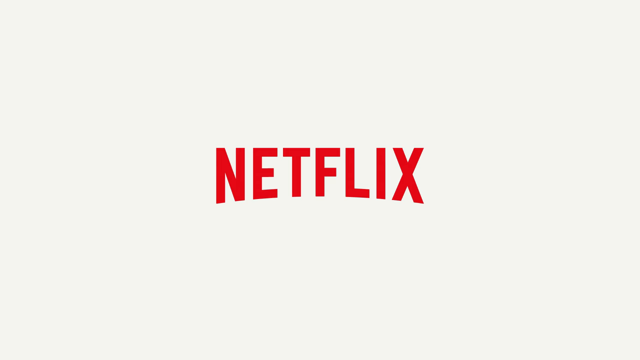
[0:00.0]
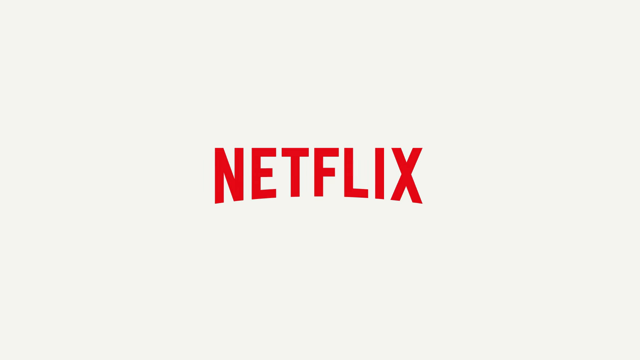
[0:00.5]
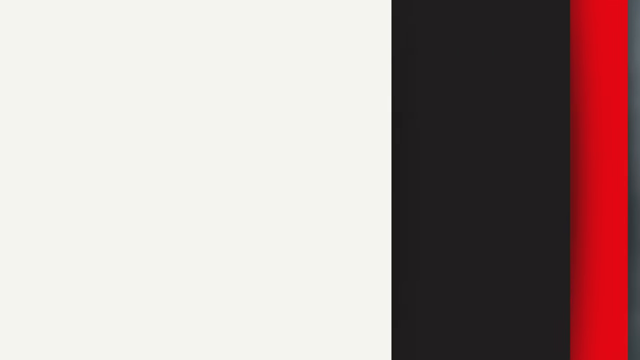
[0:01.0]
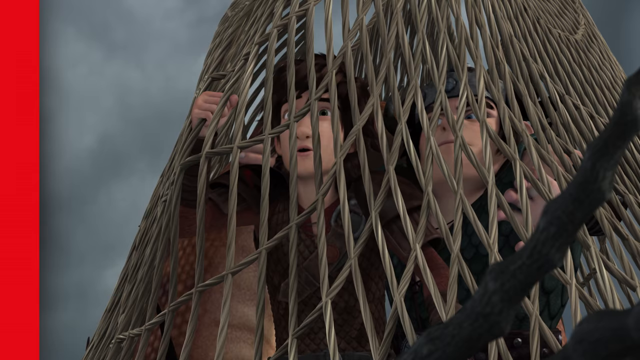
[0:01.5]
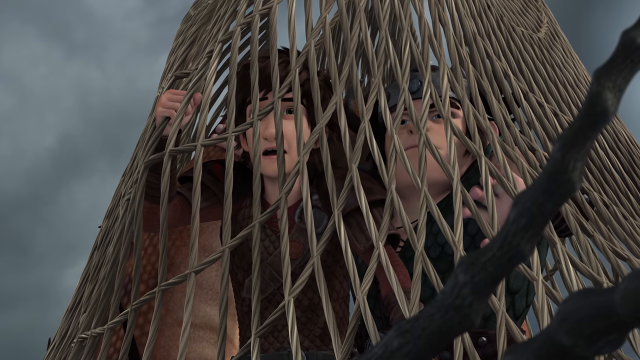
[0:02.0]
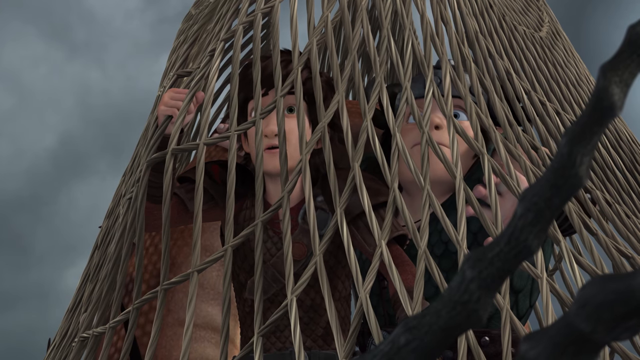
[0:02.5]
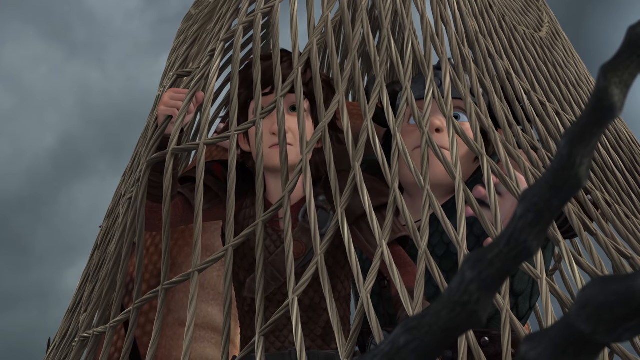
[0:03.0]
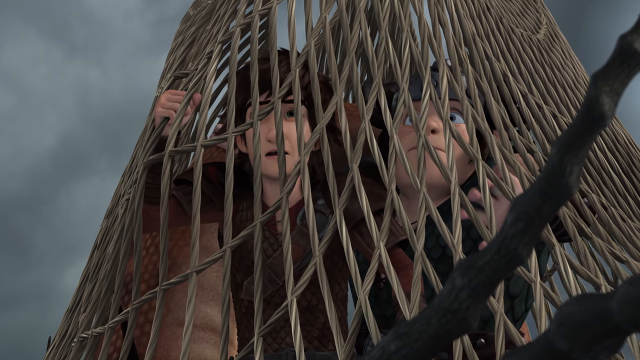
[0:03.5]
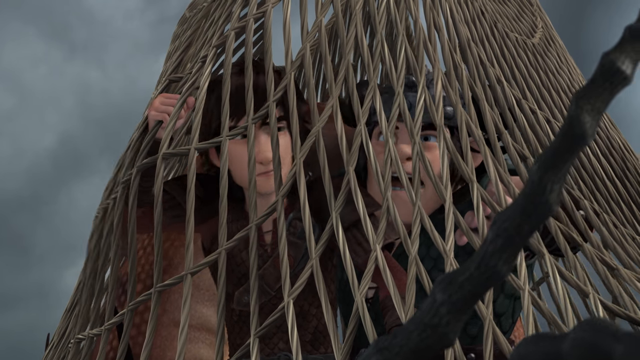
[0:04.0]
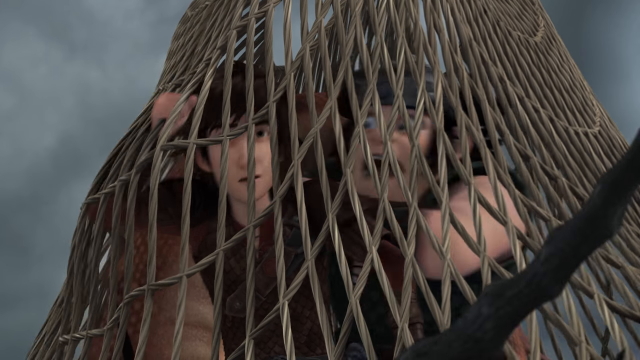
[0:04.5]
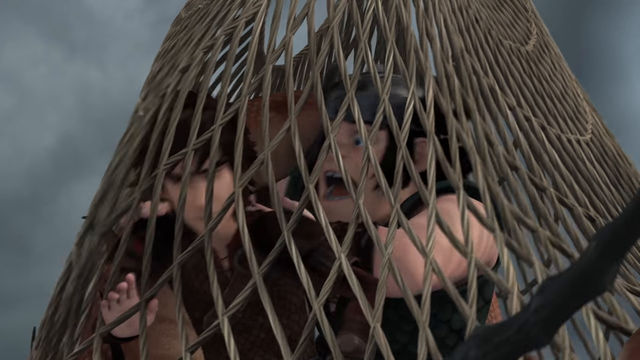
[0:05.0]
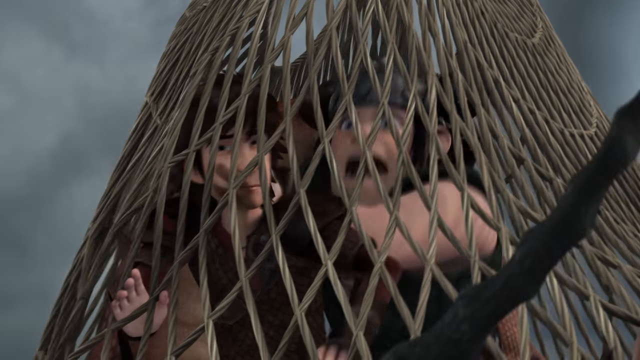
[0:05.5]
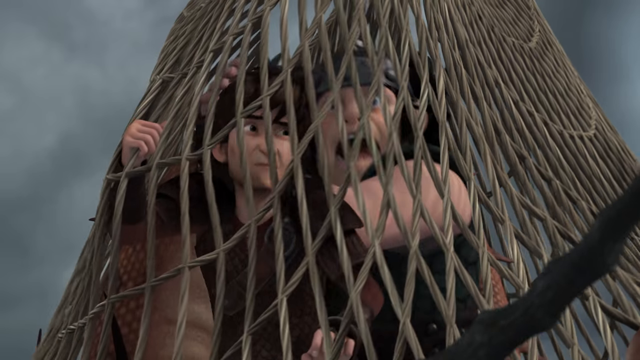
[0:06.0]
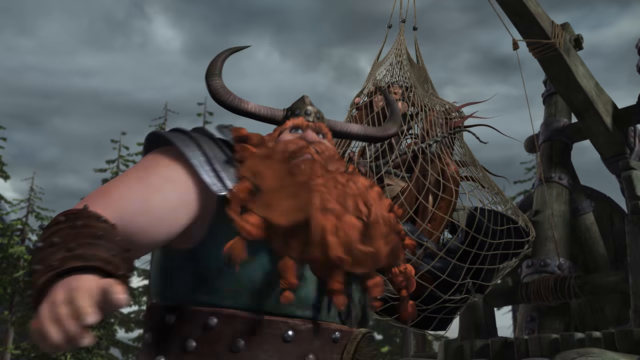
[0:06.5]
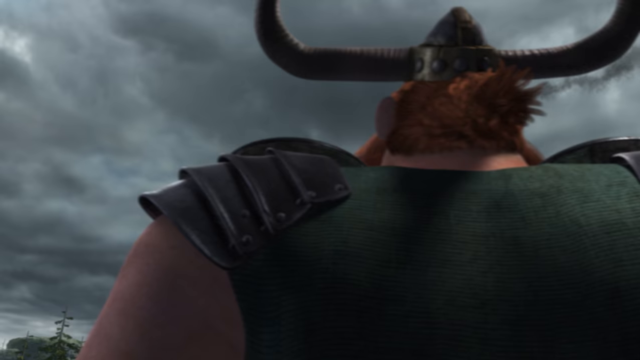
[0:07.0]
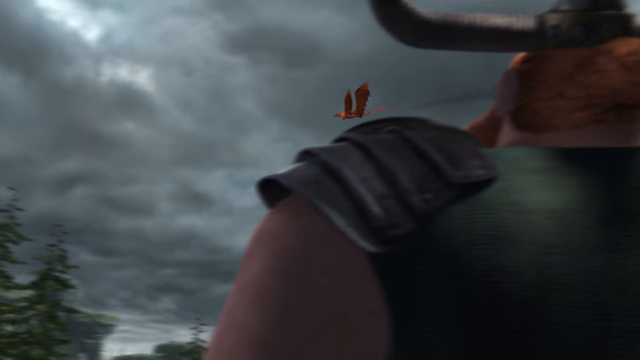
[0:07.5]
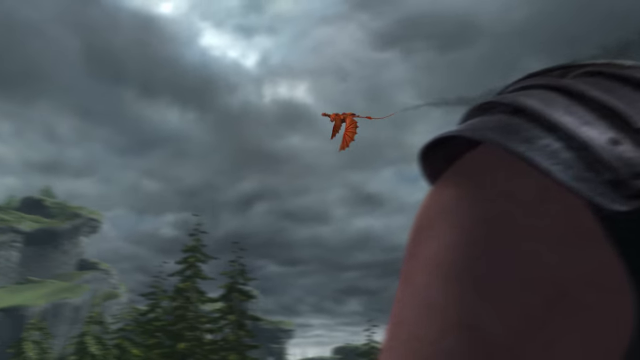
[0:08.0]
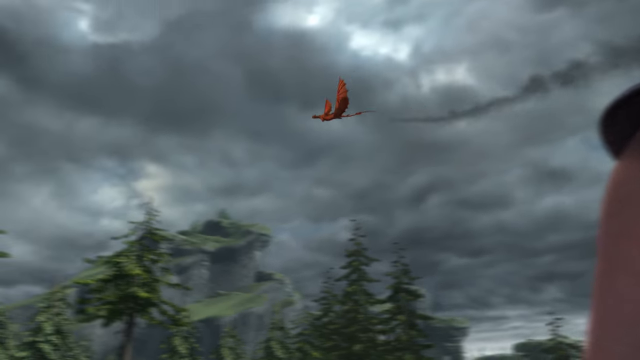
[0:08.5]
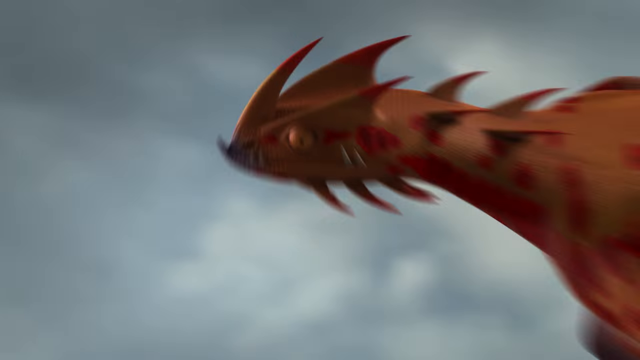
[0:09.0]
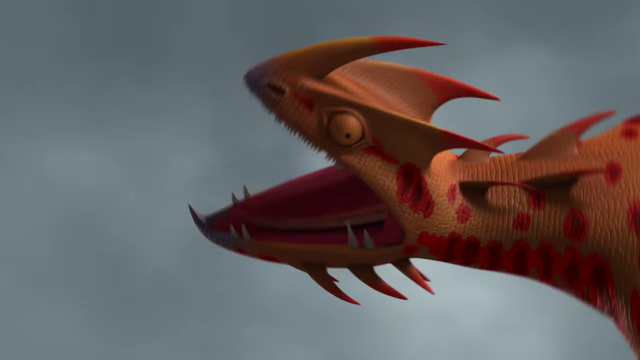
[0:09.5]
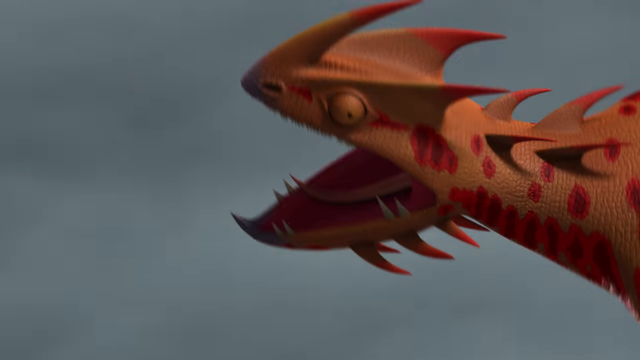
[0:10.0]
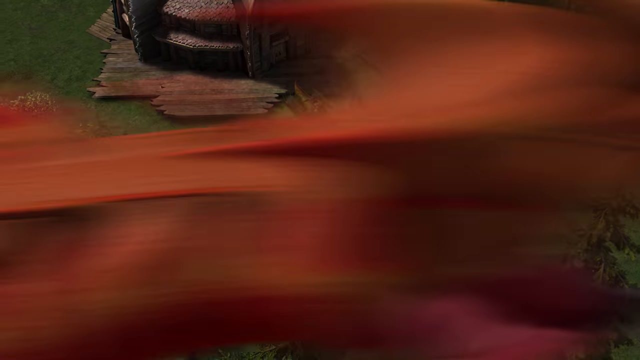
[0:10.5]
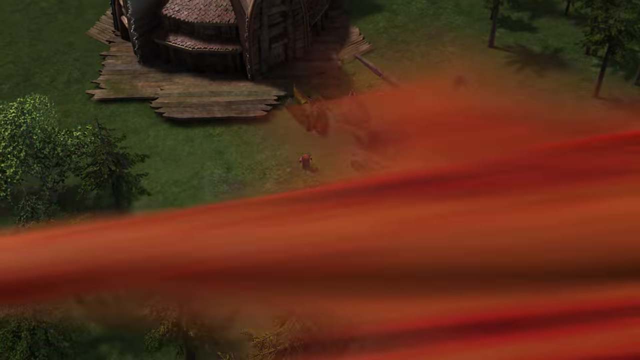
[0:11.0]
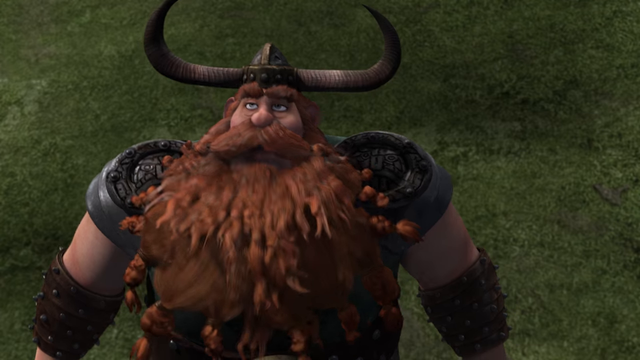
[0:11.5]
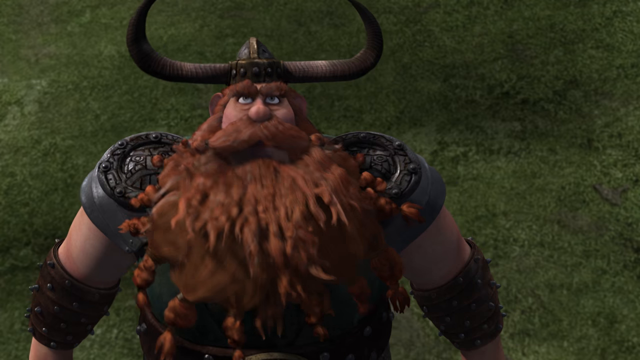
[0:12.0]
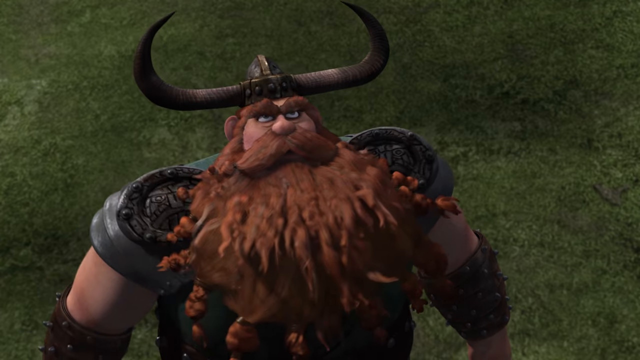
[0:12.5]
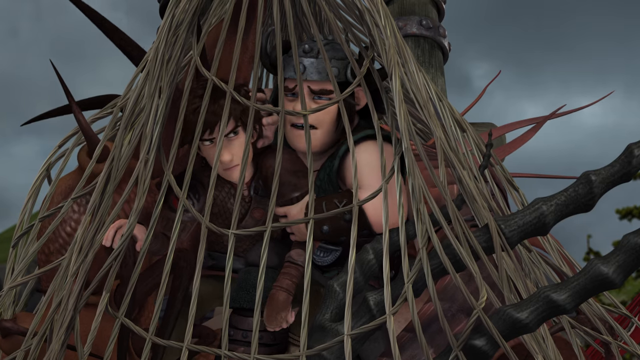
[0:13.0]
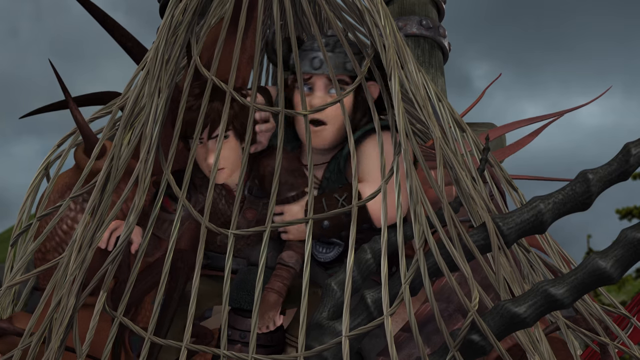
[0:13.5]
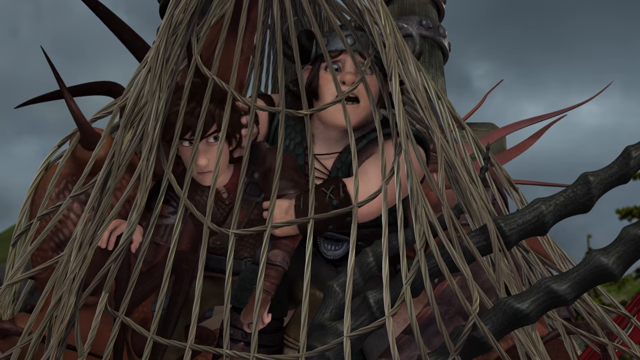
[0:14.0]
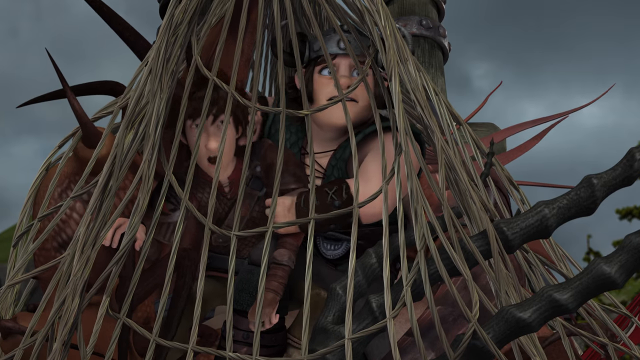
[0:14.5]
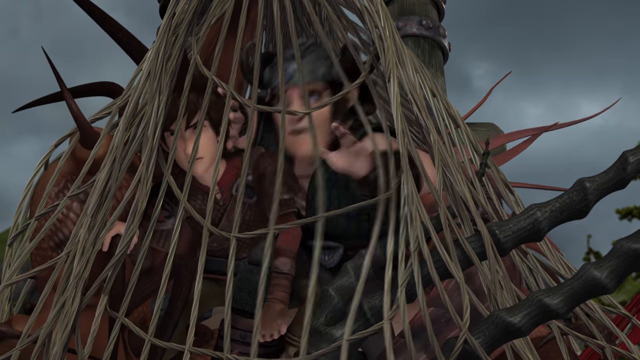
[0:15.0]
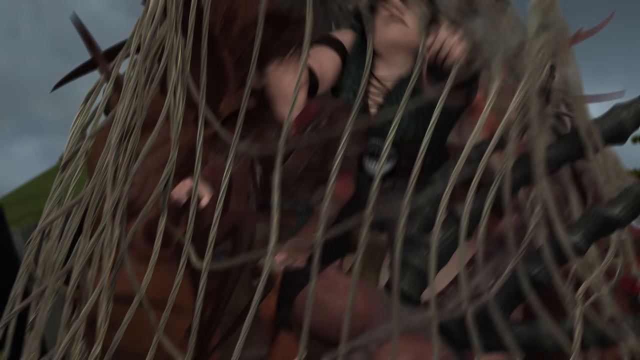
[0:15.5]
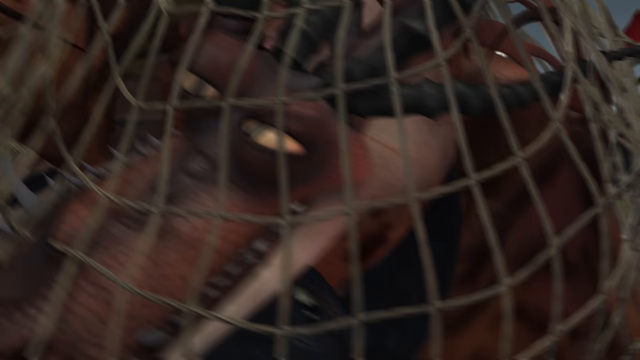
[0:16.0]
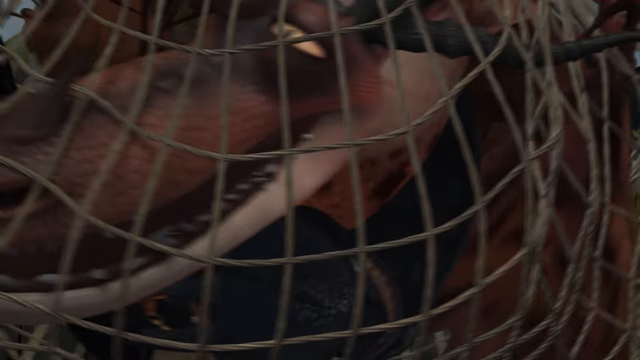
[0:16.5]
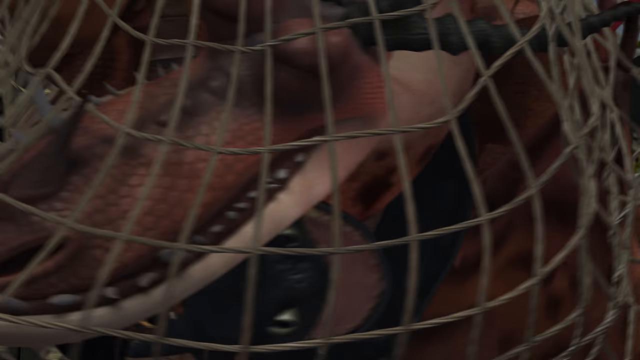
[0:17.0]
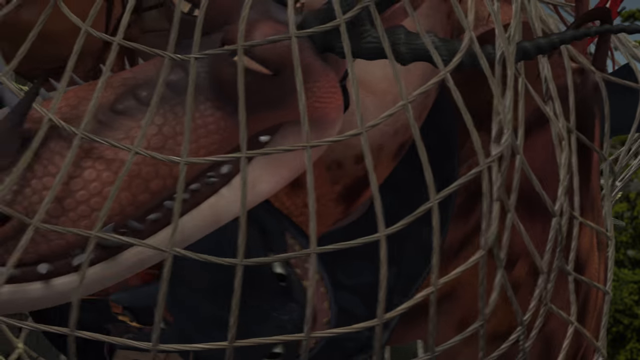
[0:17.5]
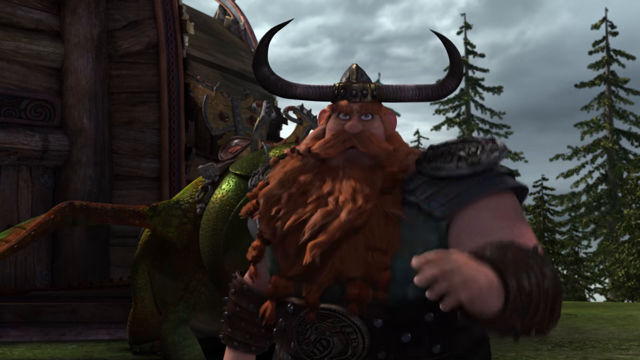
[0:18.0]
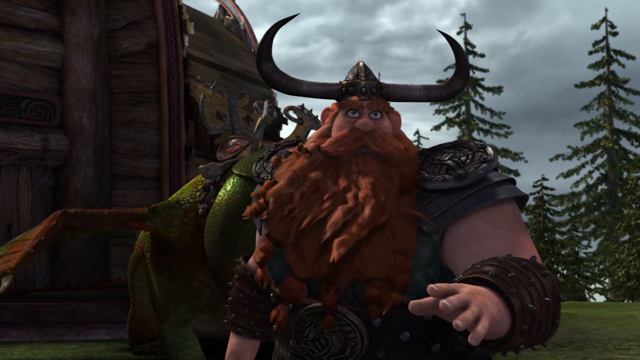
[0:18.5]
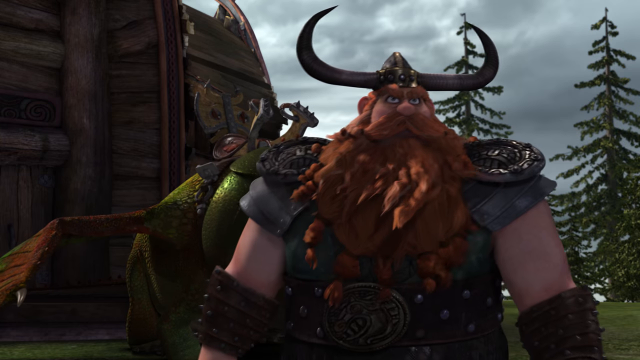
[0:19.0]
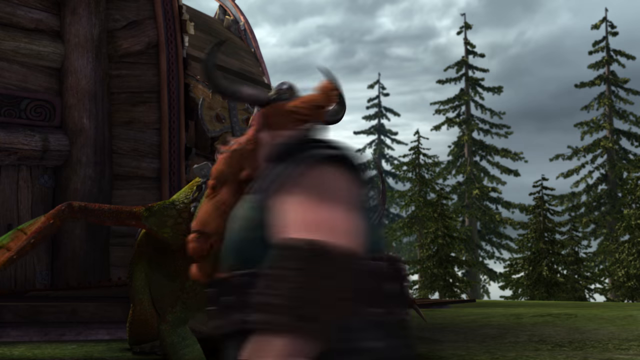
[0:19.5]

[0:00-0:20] The video begins with the Netflix logo: the word "Netflix" is written in red capital letters on a white screen. The screen then transitions to what looks like an animated film. Two characters are caught in some kind of trap, in some sort of net that is suspended as if they have been trapped. They seem to be arguing with each other, and one grabs the other and is kind of shaking him. A Viking is on the ground outside the net they are stuck in. Everybody looks up, and an orange dragon is flying through the sky. The Viking on the ground, who has a helmet with horns on it and a bushy beard, is talking. The two guys stuck in the net, suspended in the air, speak to each other. They appear to have a creature stuck in there with them; its face can be made out down below where they are standing inside the net.